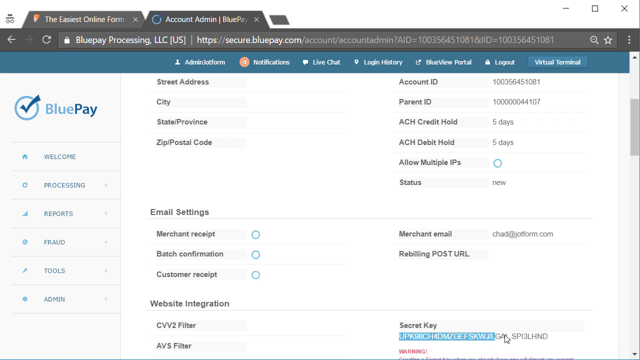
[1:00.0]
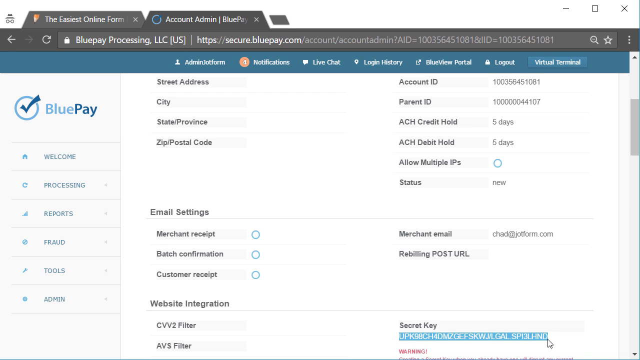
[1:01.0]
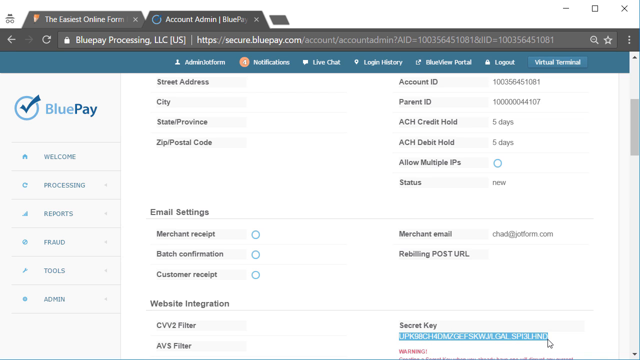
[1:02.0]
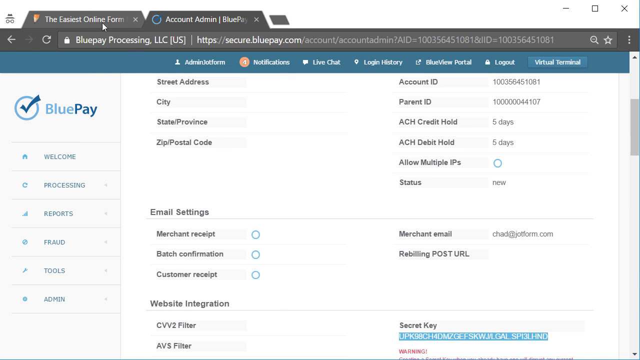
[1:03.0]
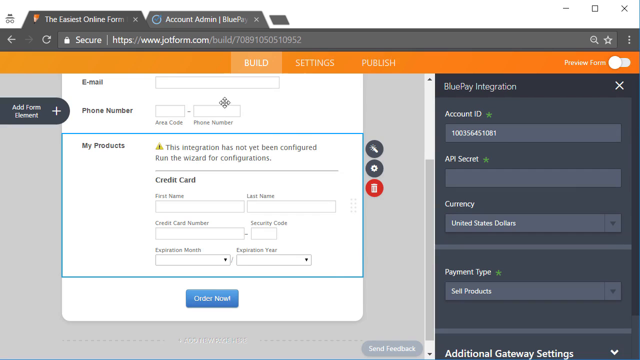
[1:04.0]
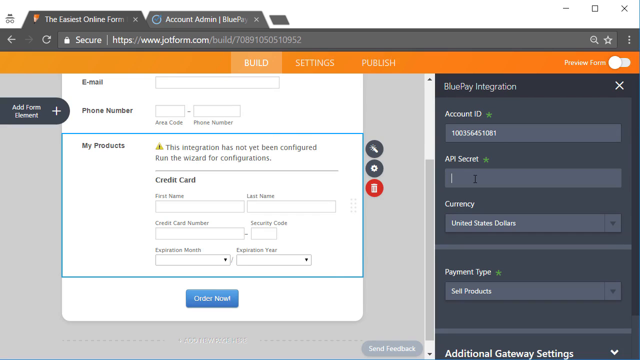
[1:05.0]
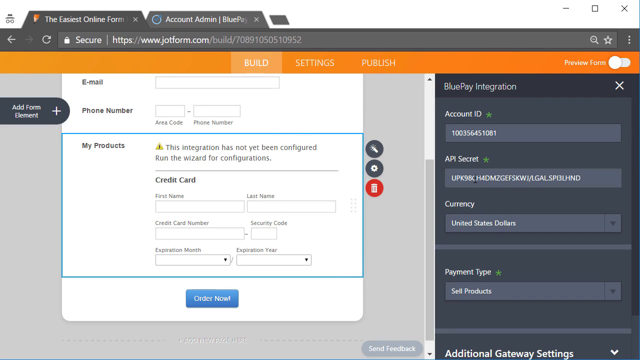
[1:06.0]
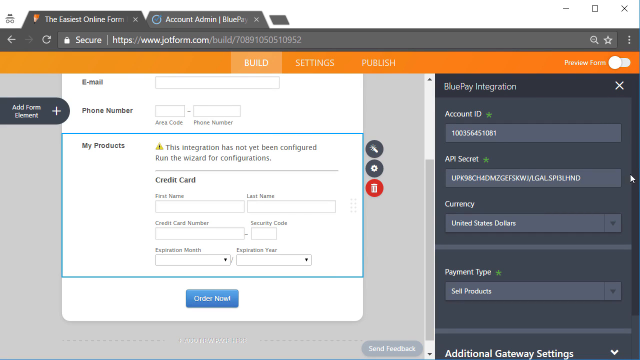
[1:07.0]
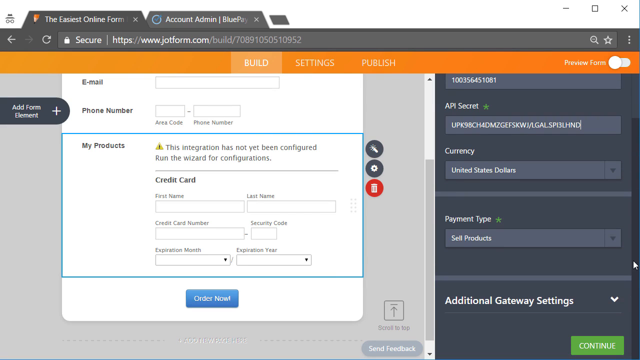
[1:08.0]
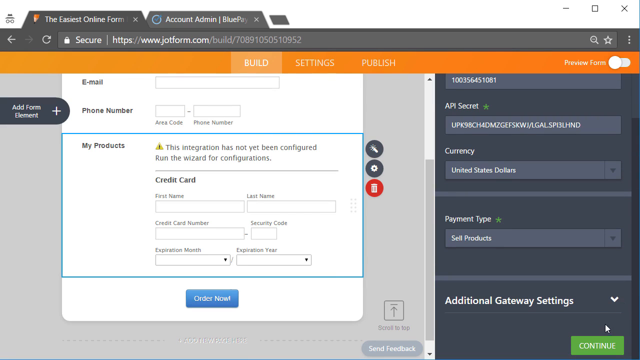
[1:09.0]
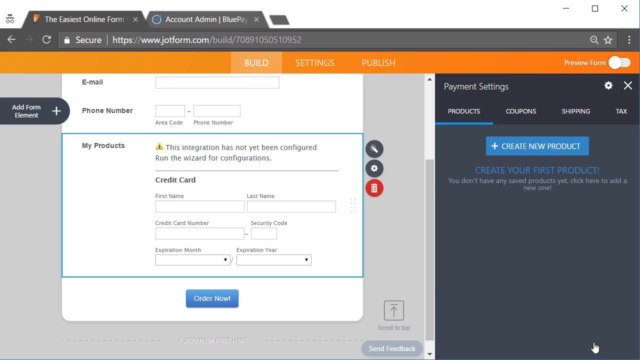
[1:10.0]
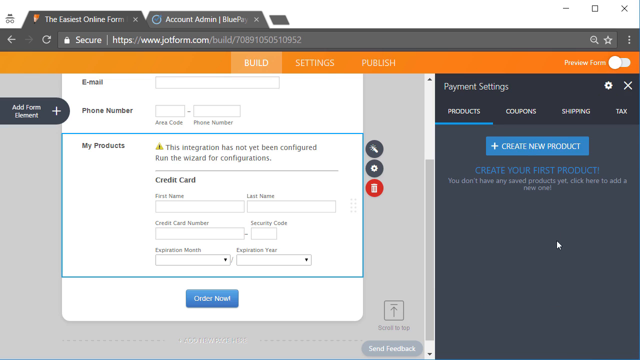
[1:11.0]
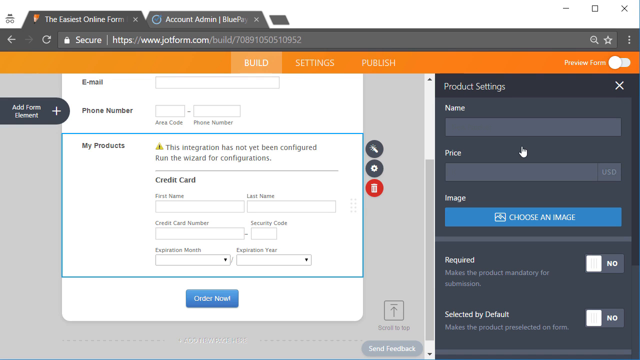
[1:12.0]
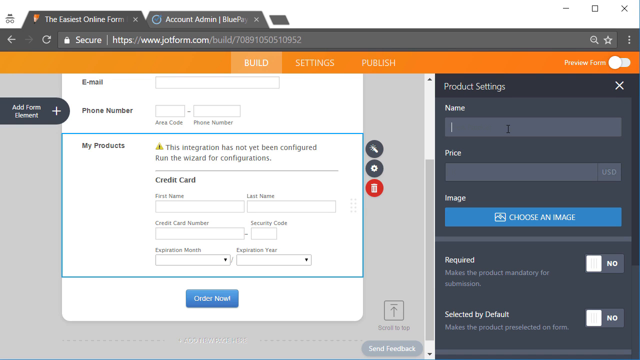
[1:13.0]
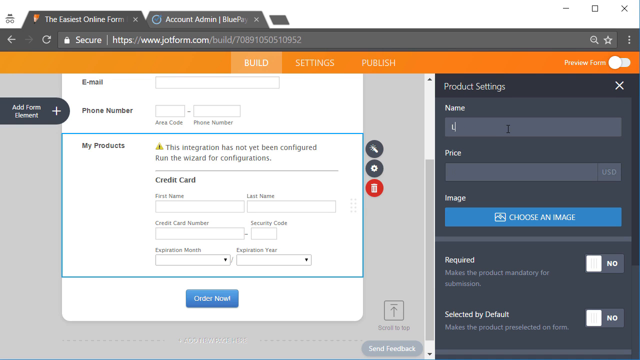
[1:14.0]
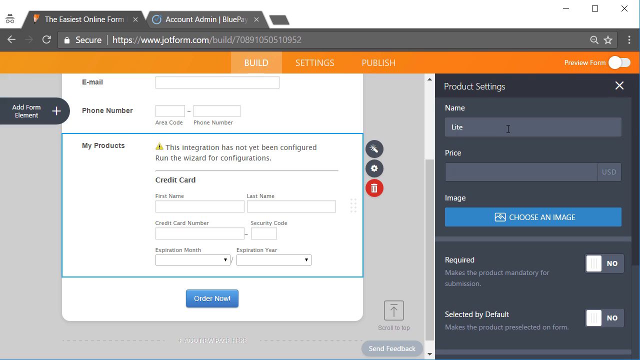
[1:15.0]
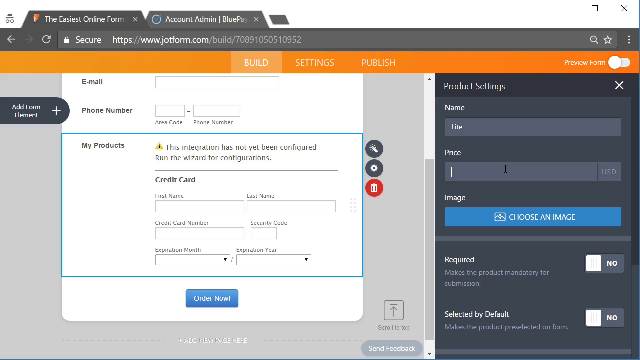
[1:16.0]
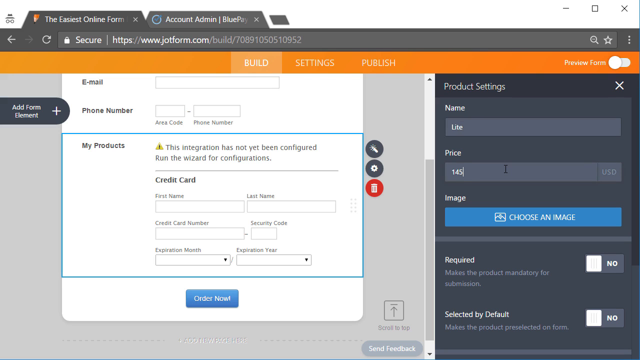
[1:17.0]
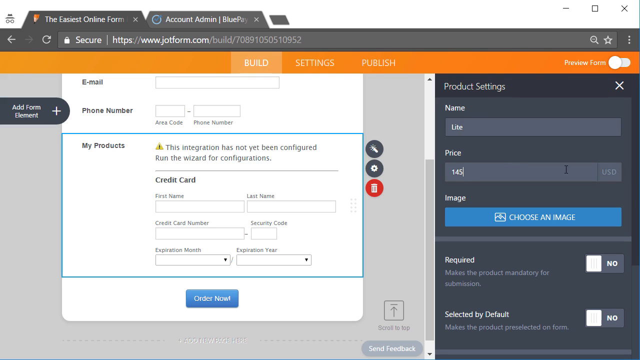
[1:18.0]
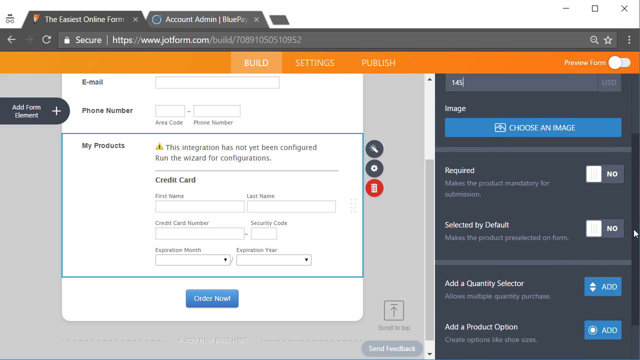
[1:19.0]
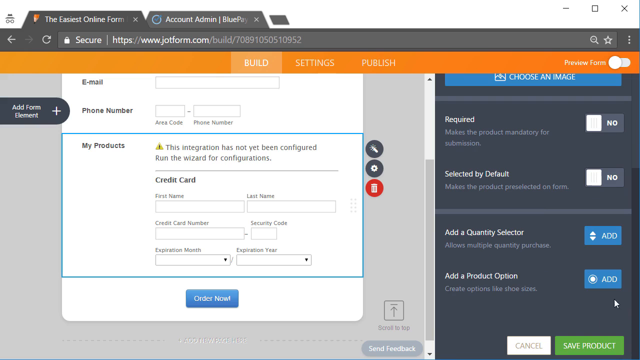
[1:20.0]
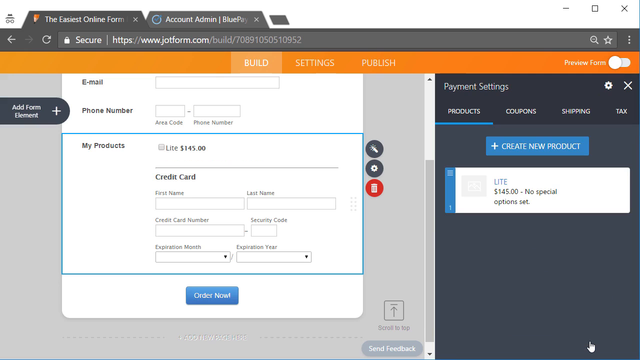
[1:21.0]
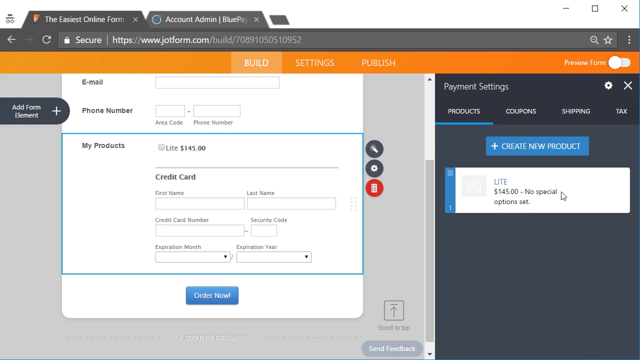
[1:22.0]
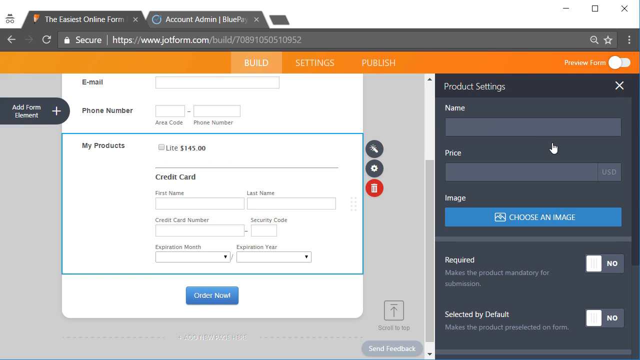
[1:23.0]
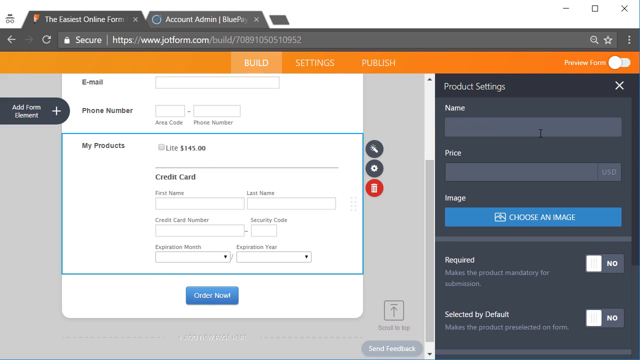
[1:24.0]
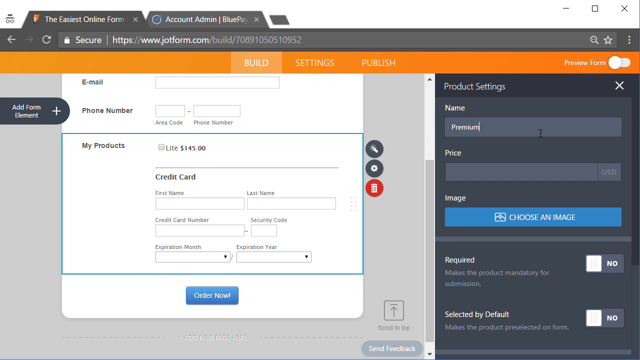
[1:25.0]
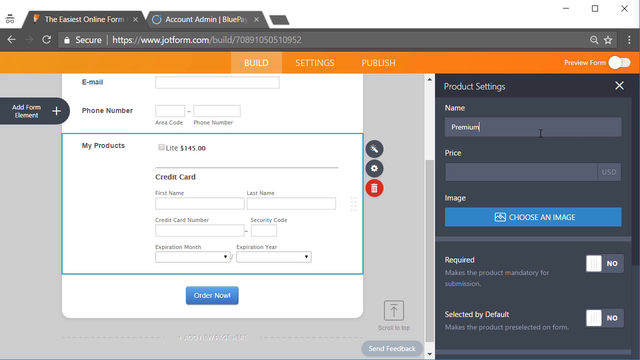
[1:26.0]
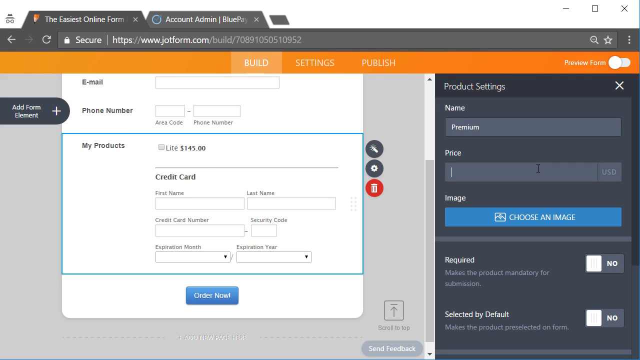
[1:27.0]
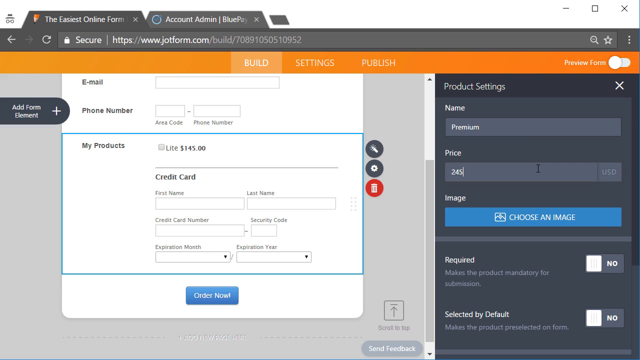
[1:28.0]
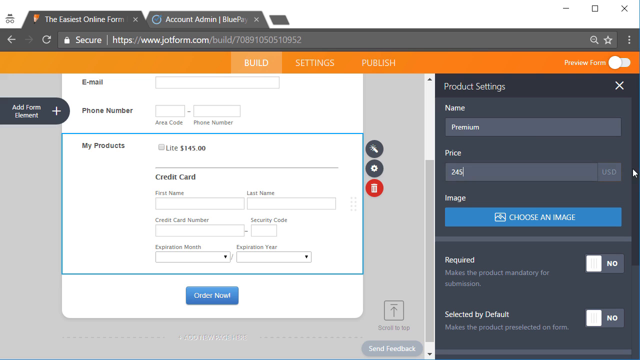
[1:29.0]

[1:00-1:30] Back on the BluePay website in the second browser tab, the account information page is open. The user has scrolled to the bottom and selected a CVV2 filter or security key; the security key is selected and copied. The user returns to the first tab, the JotForm website with the build, moves to the wizard on the right, clicks the text box labeled API secret and pastes the copied information. After scrolling to the bottom of the wizard, the API secret is filled in, the currency is set to United States dollars, and the payment type is sell products. Under Additional Gateway Settings, the user clicks a green button that reads "continue." The widget changes to a new page headed "payment setting," with the products tab selected and a blue button that reads "create new product." The user clicks it, opening a product settings page with a text box for name, a text box for price, a button to upload an image, and a required setting that makes the product mandatory for submission, which can be toggled on or off. The user types the word "life" in the name box and the number 145 in the price box, then scrolls down to the bottom and selects continue again.